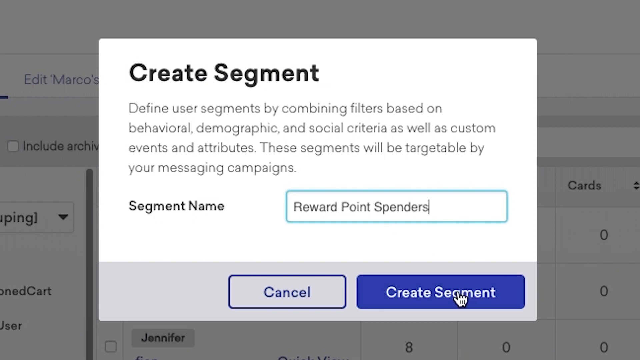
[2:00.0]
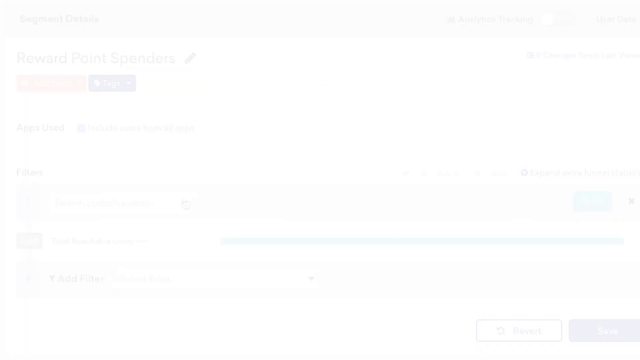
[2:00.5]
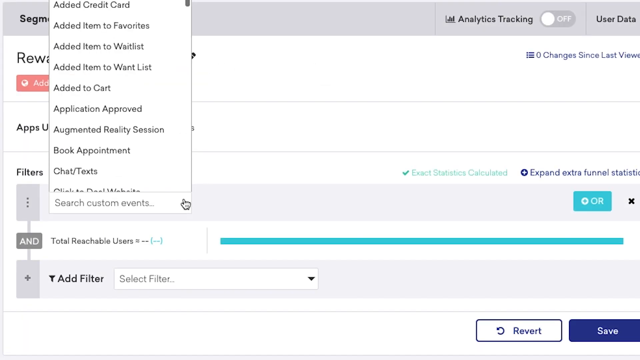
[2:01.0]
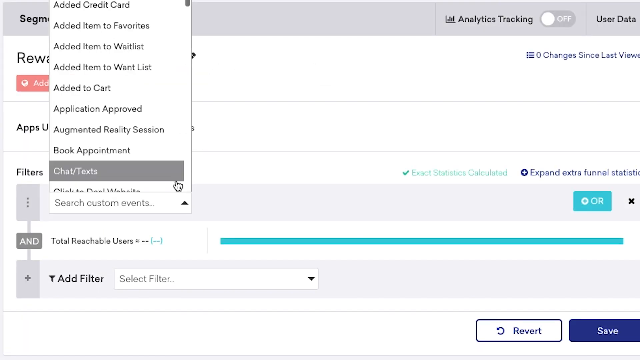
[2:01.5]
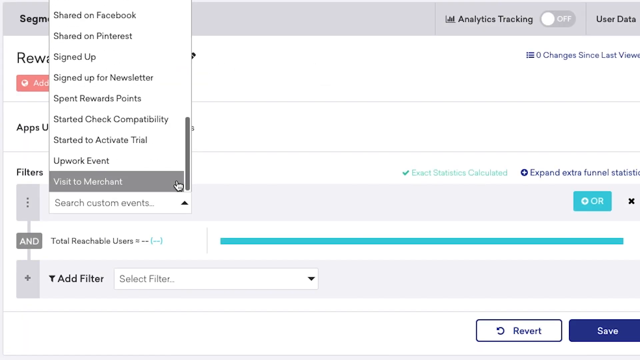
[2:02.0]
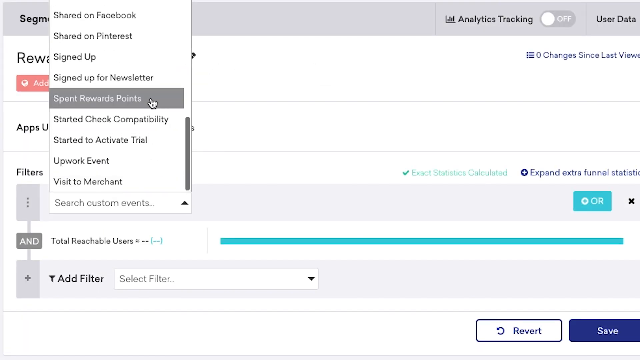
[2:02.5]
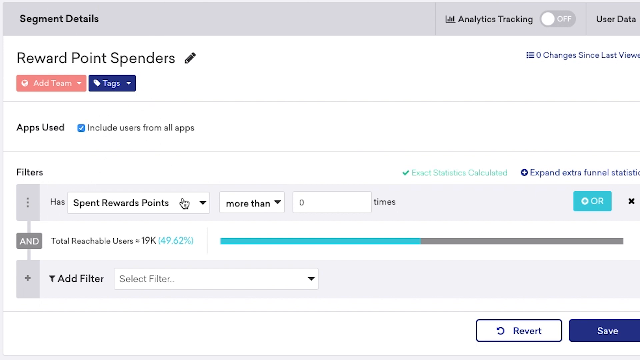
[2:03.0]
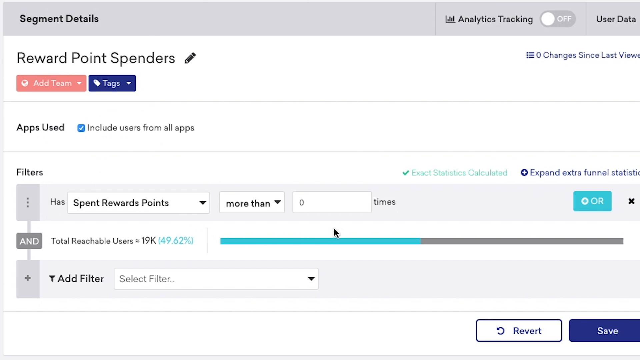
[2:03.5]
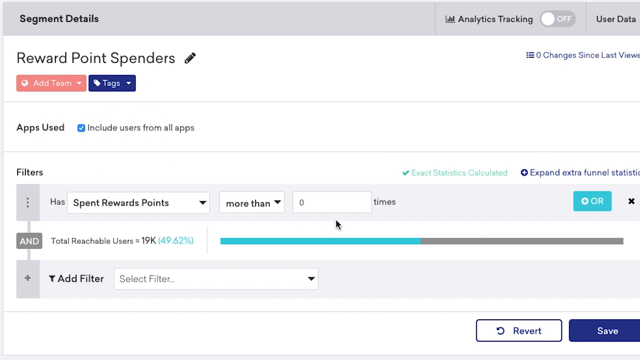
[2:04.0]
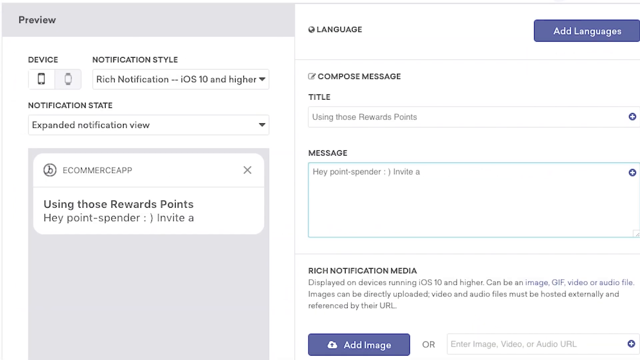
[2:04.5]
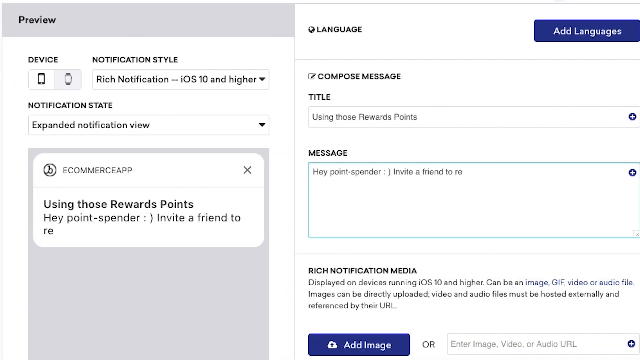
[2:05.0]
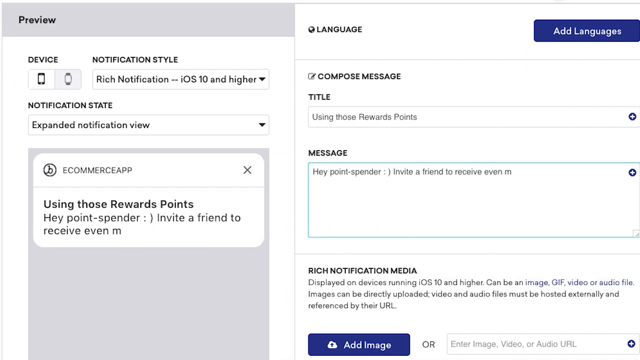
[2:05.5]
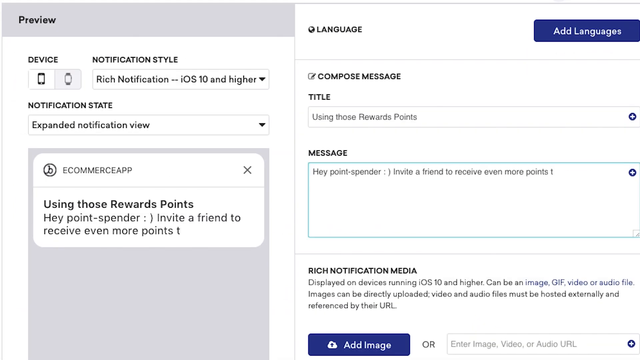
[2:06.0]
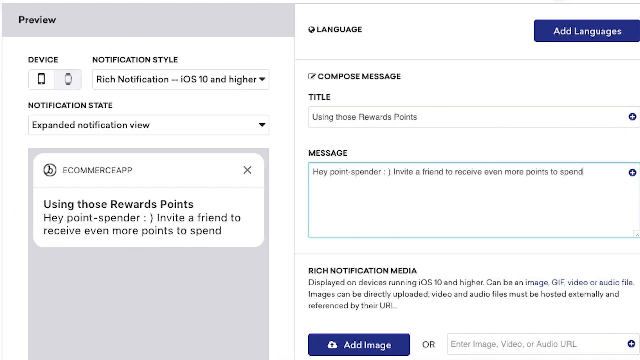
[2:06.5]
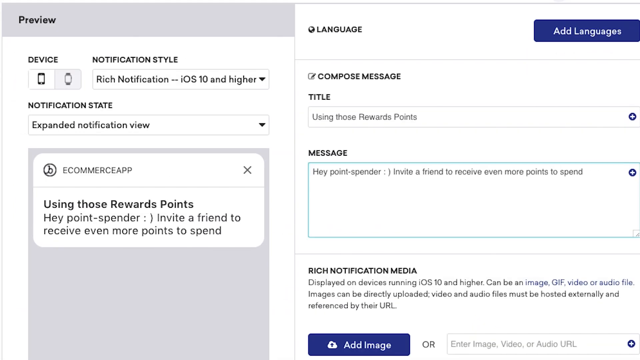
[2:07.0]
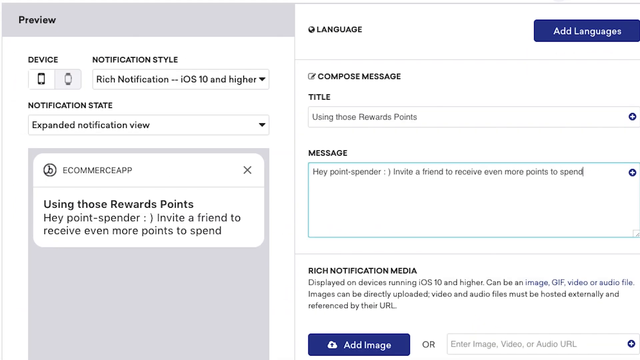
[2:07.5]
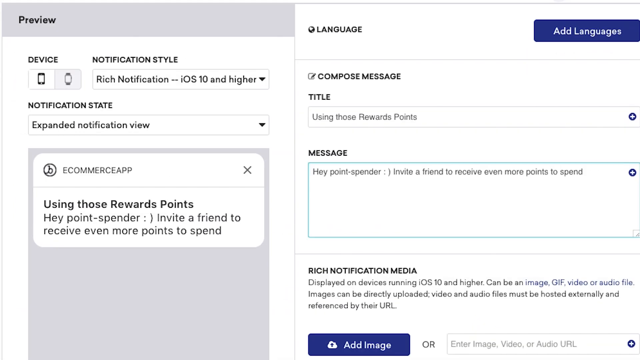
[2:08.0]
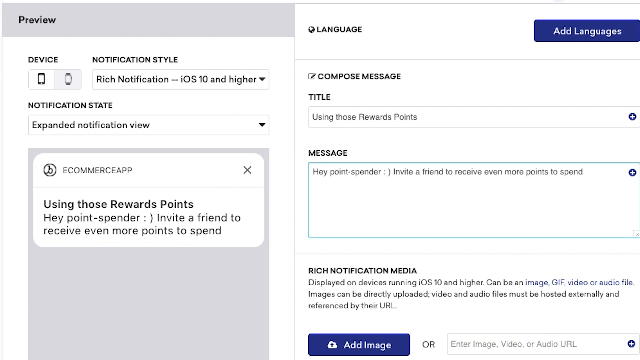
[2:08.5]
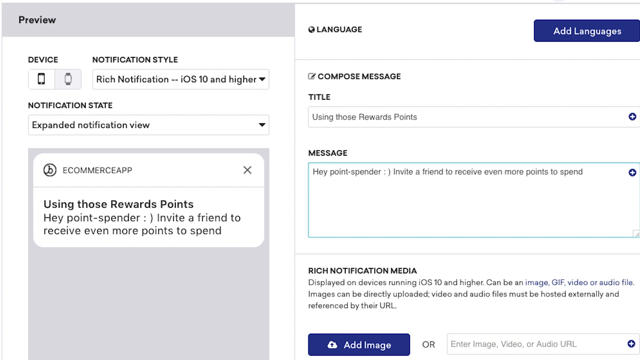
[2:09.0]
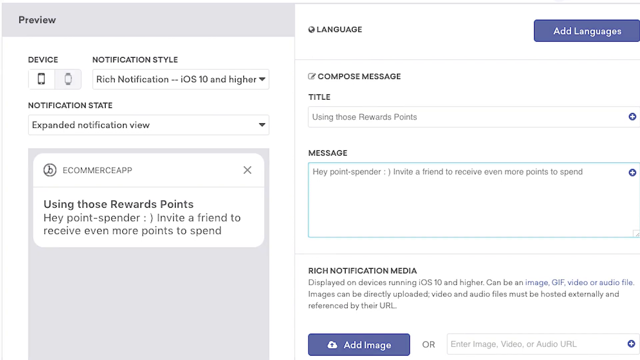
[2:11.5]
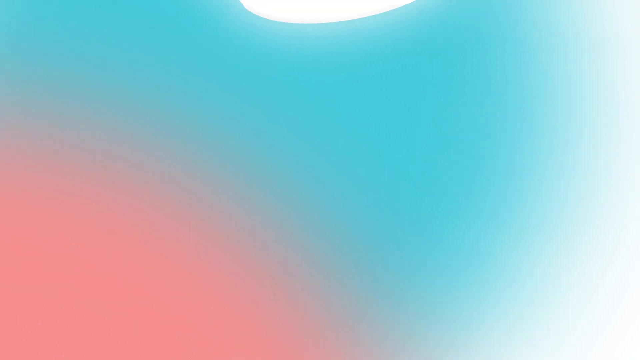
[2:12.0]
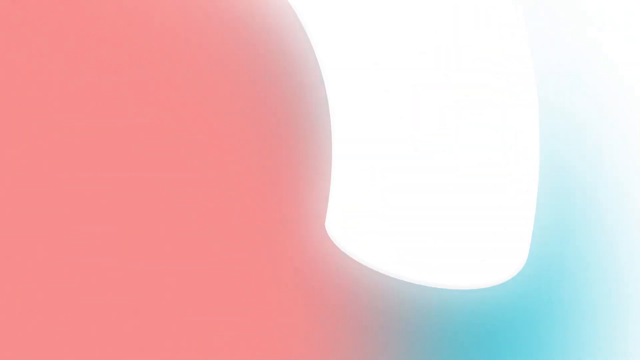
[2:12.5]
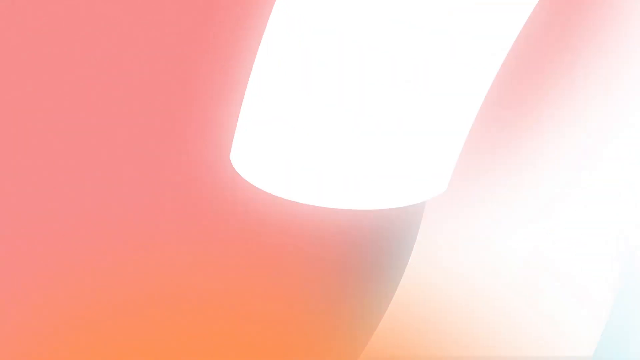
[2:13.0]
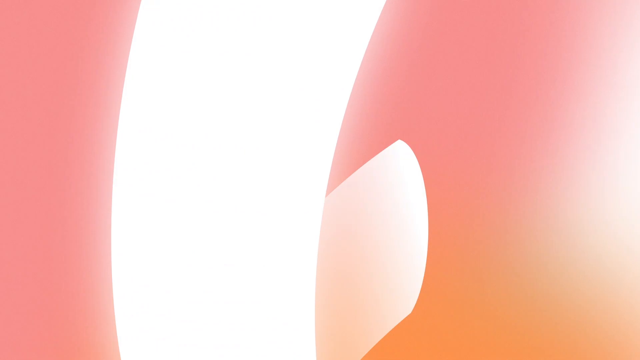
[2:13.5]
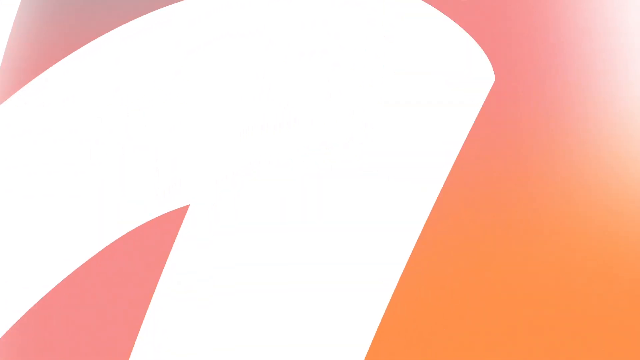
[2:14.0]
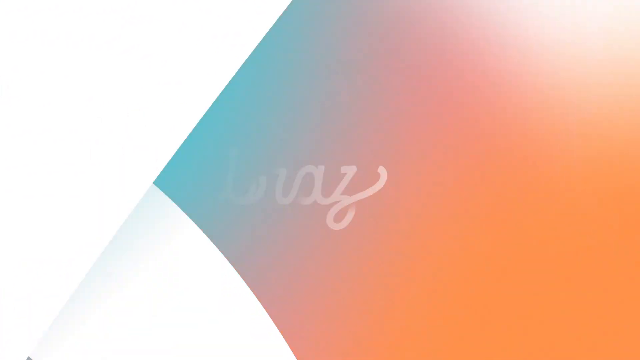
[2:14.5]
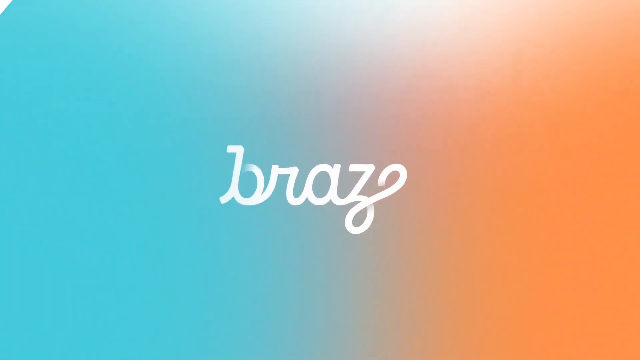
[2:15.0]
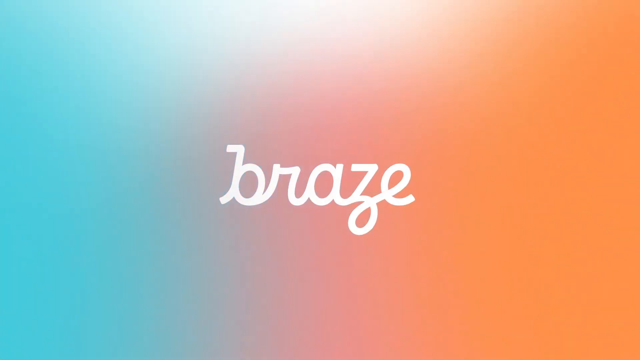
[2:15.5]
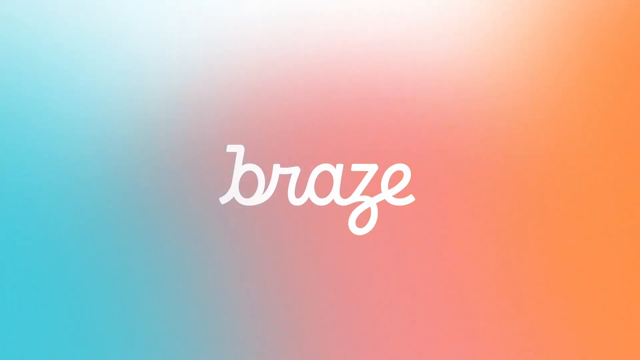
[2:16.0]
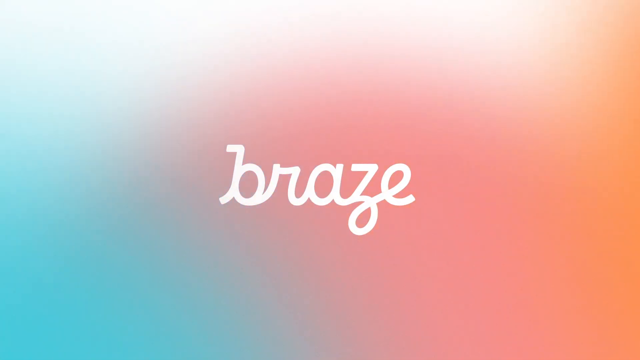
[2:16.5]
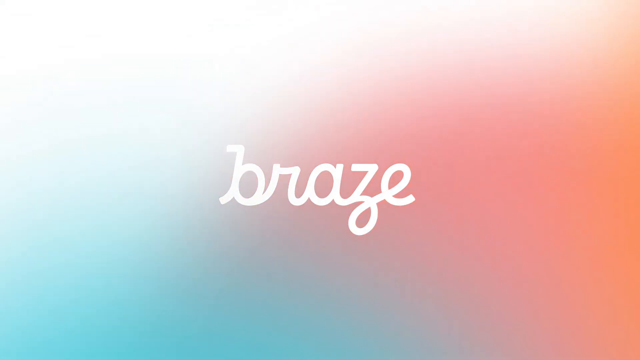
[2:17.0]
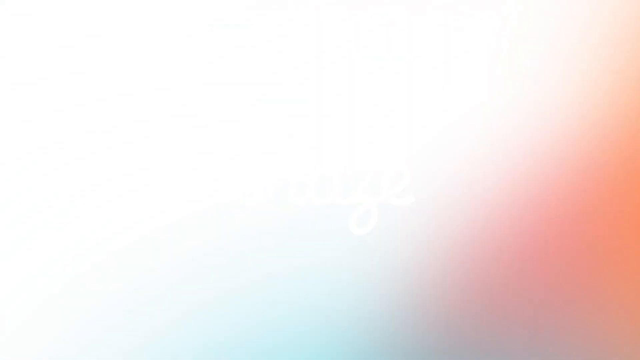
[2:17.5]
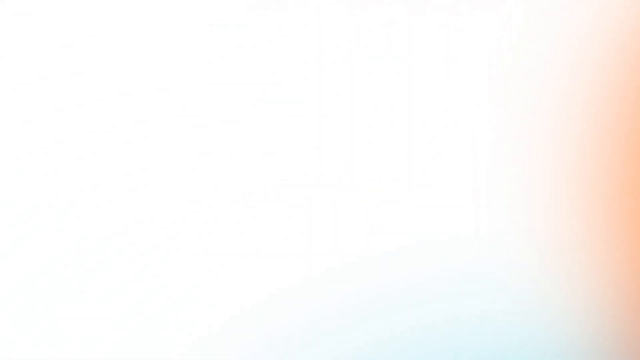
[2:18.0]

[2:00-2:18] The Braze app, which features profiles of people, opens to show six clickable subsections with buttons. At the upper left is "contact settings," which includes items such as "email," "push" and "push registered for." Below that is "communication stats," with items such as "last received from any campaign." To the bottom right it says "News Feed Cards Clicked," and at the lower right "Install Attribution," with "No Install Attribution Information" below it. The word "social" is then highlighted, opening Annika's profile view, and the mouse scrolls down her profile. Suddenly "create a segment" pops up. The create segment box has a segment name field with the mouse pointed at it, and "reward point spenders" has been typed in. Below are two buttons: on the lower left, against a gray banner, "cancel," and to the right "create segment," a dark blue button with white text. Text reads "define user segments by combining filters based on behavioral, demographic and social criteria."